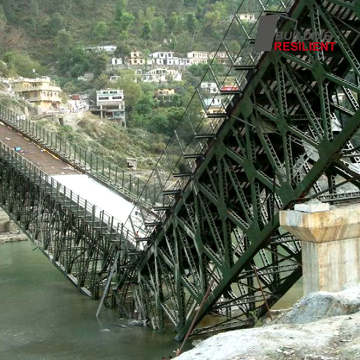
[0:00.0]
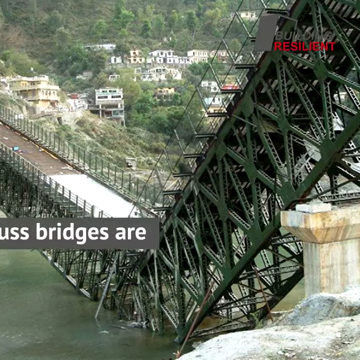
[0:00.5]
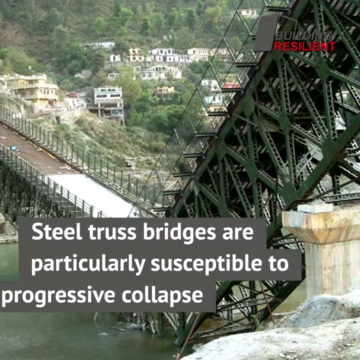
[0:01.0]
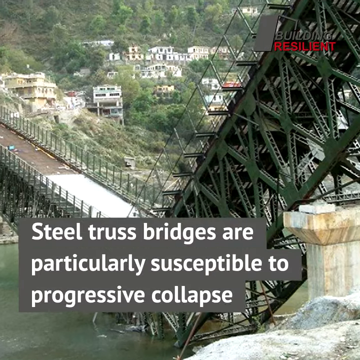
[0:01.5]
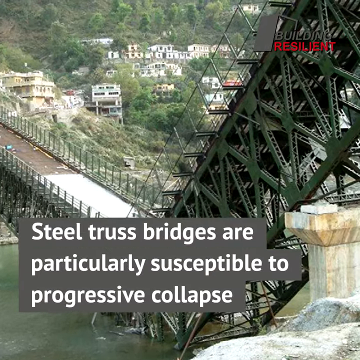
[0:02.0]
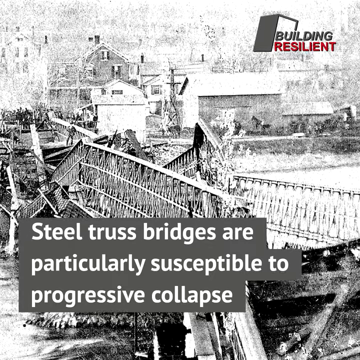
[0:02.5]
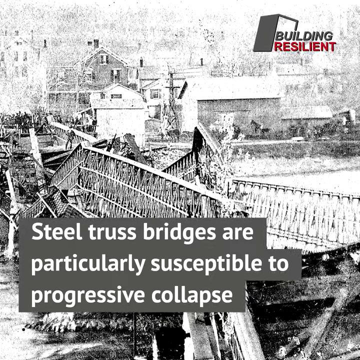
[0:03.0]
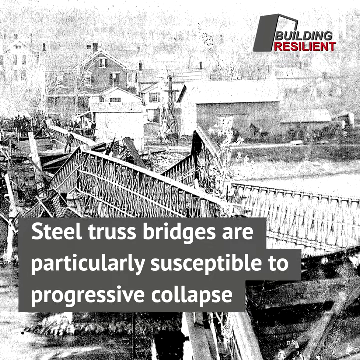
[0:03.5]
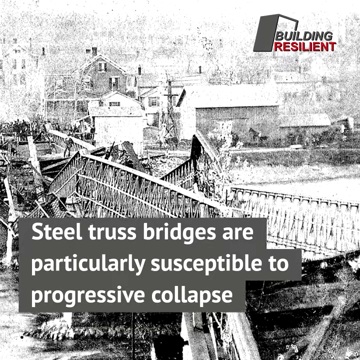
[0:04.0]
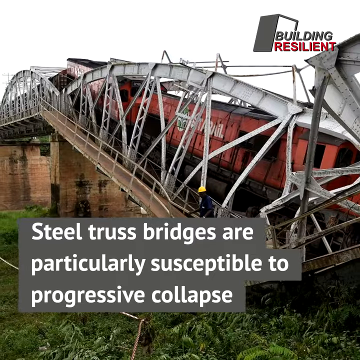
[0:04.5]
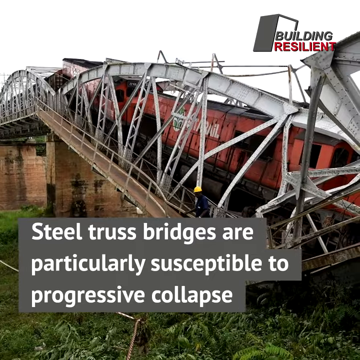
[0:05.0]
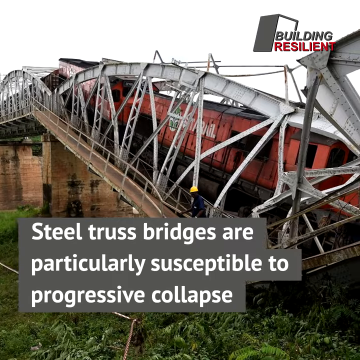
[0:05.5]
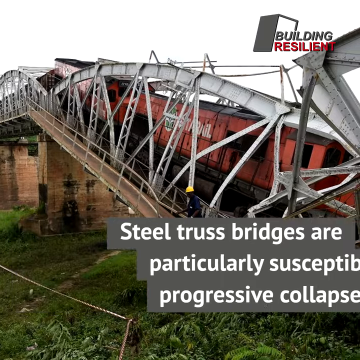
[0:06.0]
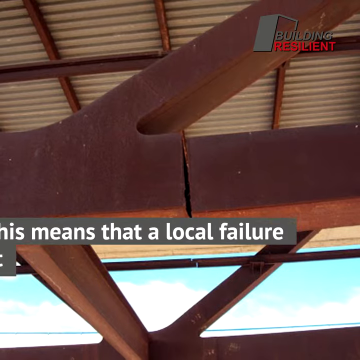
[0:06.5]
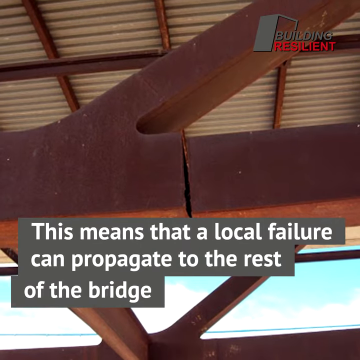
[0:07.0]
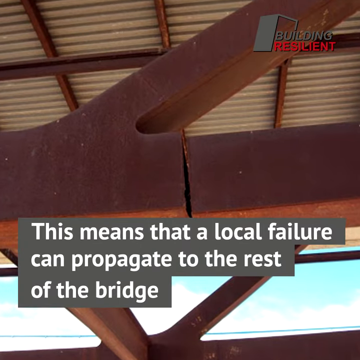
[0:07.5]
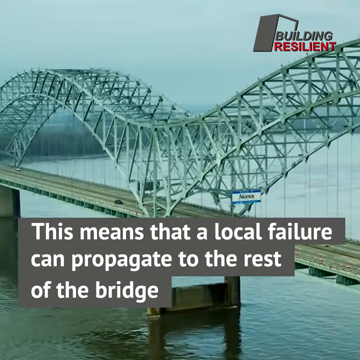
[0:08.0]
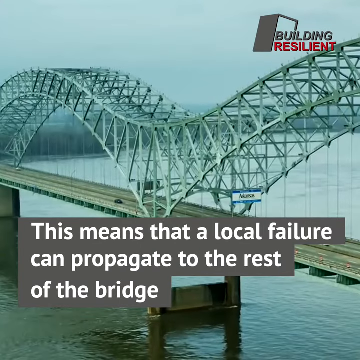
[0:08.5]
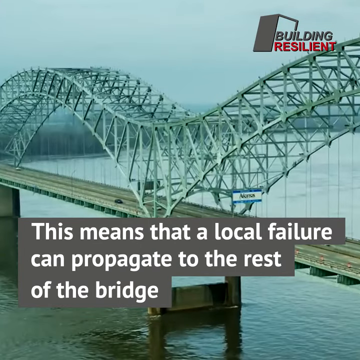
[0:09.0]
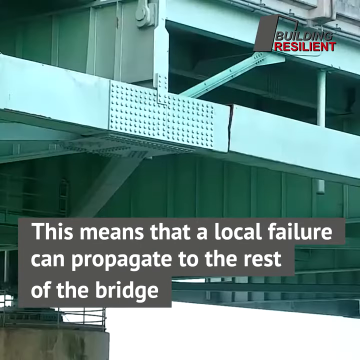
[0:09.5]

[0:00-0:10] The video opens on black-and-white imagery with many bridges in the background and the text "steel truss bridges are particularly susceptible to progressive collapse". The images then turn to color, and the words "this means that a local failure can propagate to the rest of the bridge" appear. The bridge shown possibly spans between Arkansas and Tennessee; a sign says "Arkansas" and is sort of like the shape of the bridge. Another bridge with a steep bend in it follows, and the words "steel truss bridges are particularly susceptible to progressive collapse" pop up on the screen as the imagery returns to black and white. Next, an image of a bridge shows what looks like a metal or iron portion with a very large crack in it.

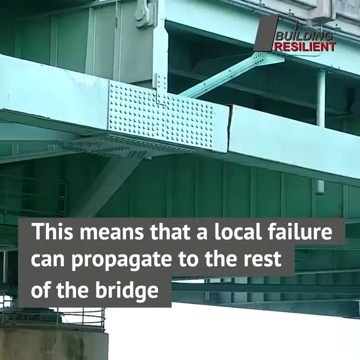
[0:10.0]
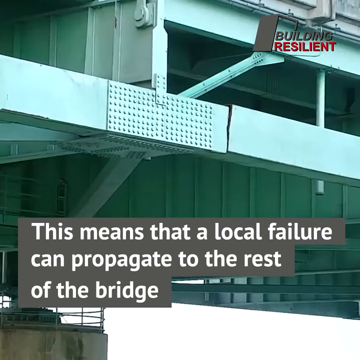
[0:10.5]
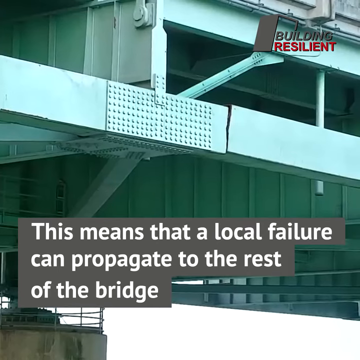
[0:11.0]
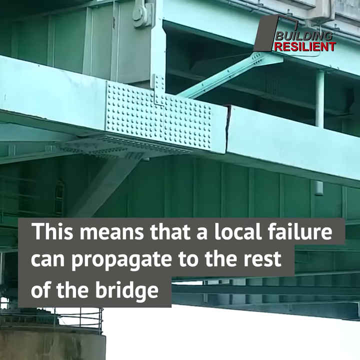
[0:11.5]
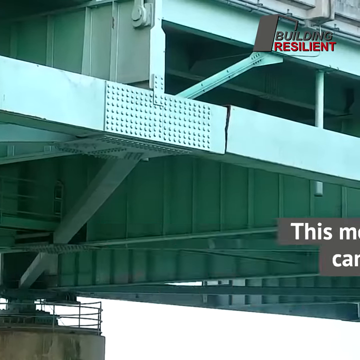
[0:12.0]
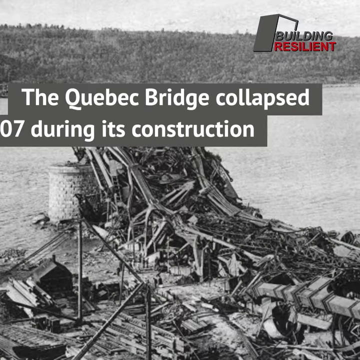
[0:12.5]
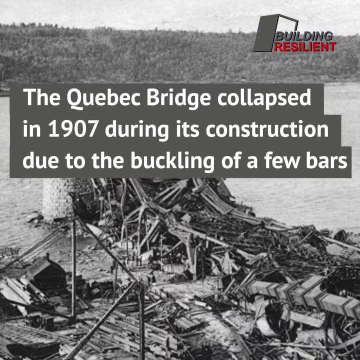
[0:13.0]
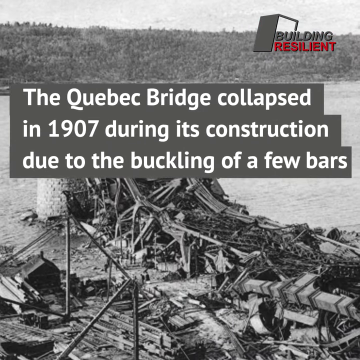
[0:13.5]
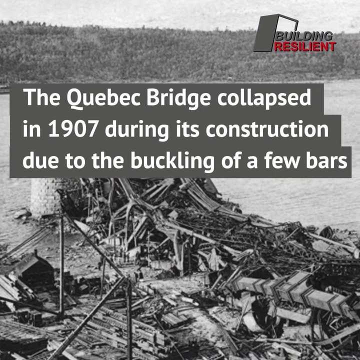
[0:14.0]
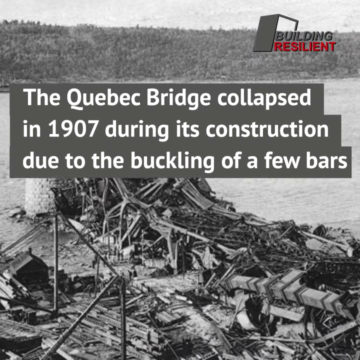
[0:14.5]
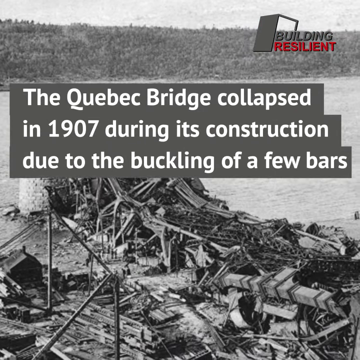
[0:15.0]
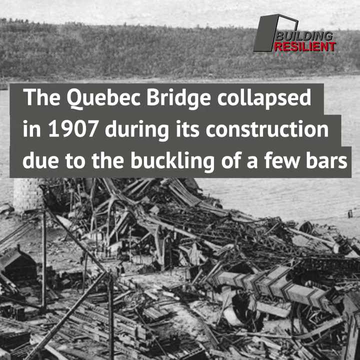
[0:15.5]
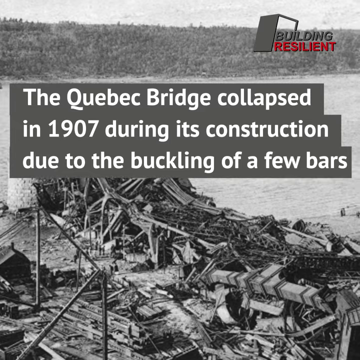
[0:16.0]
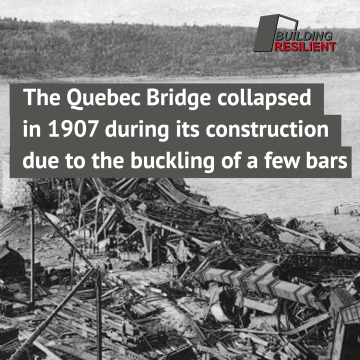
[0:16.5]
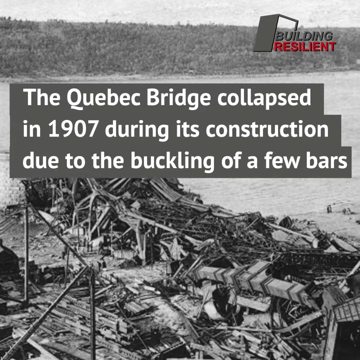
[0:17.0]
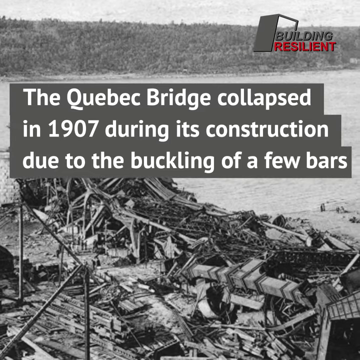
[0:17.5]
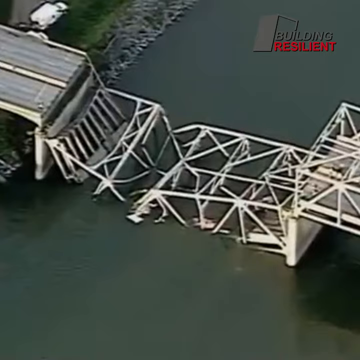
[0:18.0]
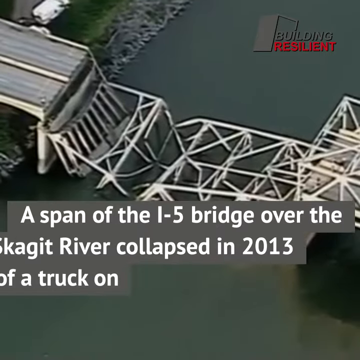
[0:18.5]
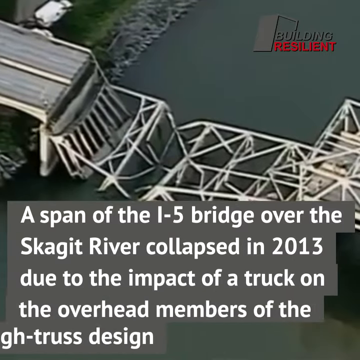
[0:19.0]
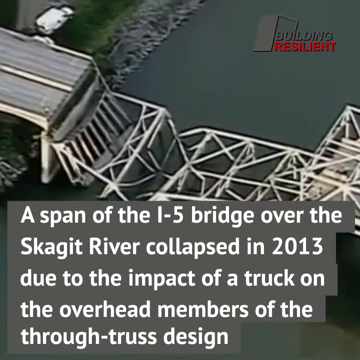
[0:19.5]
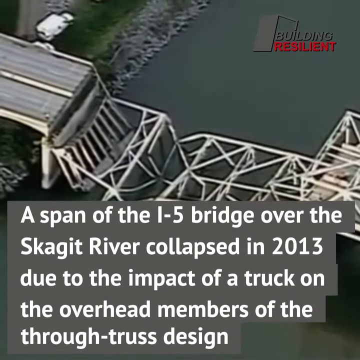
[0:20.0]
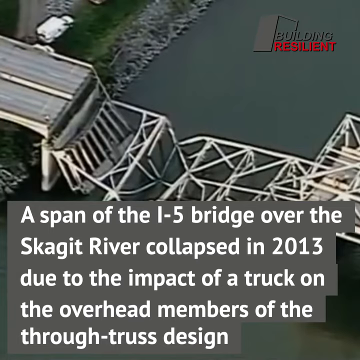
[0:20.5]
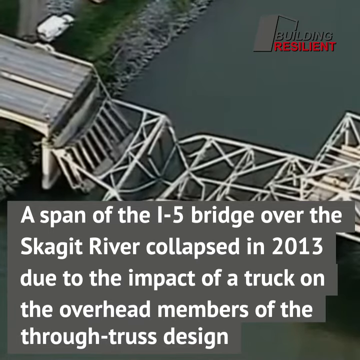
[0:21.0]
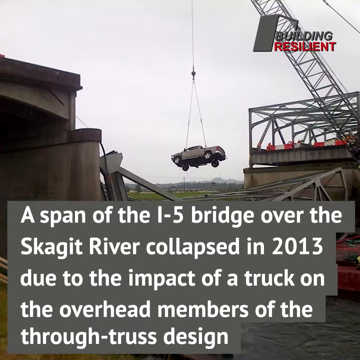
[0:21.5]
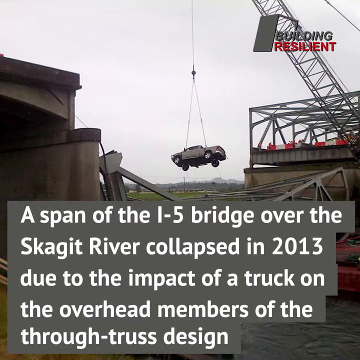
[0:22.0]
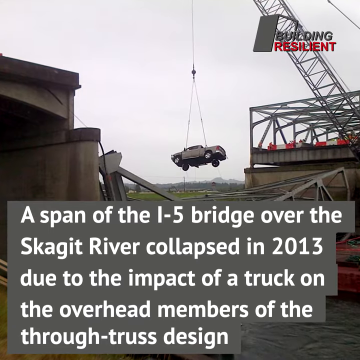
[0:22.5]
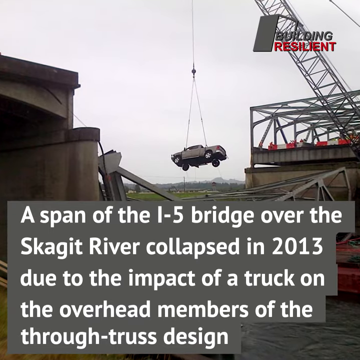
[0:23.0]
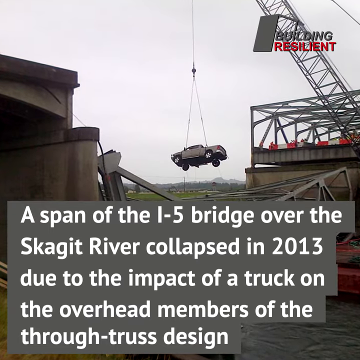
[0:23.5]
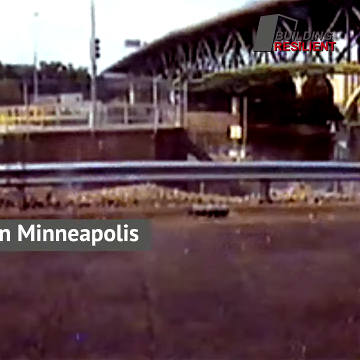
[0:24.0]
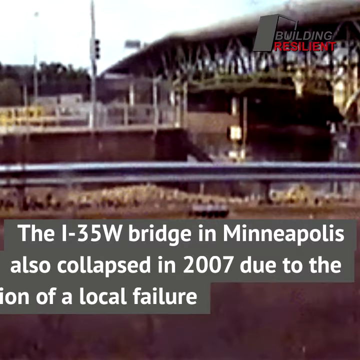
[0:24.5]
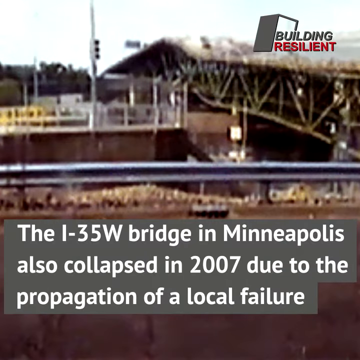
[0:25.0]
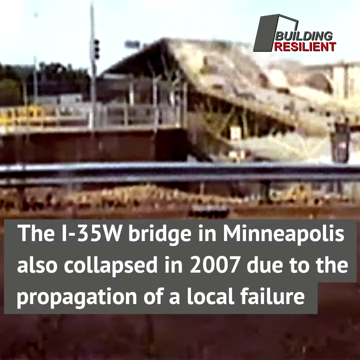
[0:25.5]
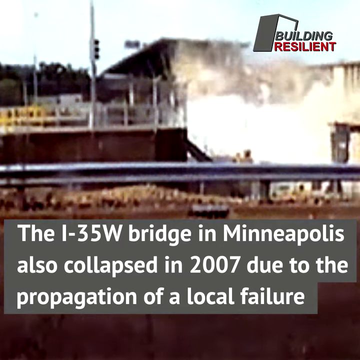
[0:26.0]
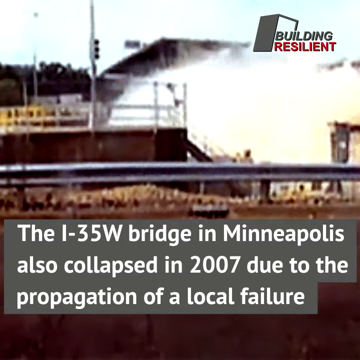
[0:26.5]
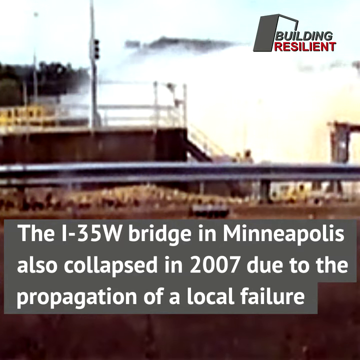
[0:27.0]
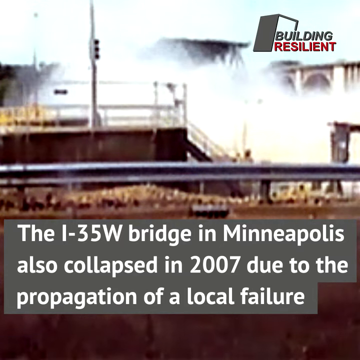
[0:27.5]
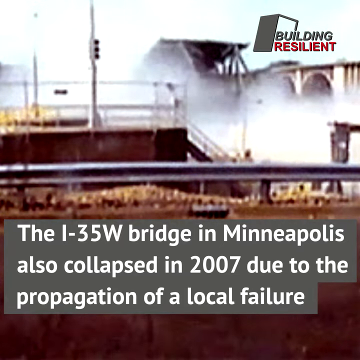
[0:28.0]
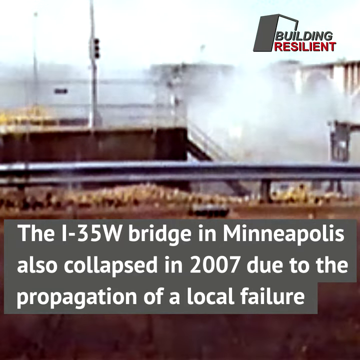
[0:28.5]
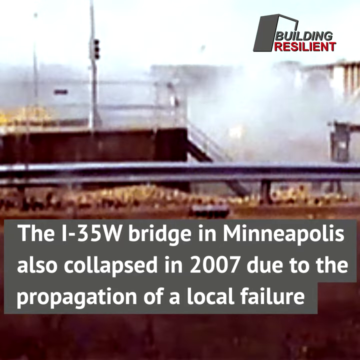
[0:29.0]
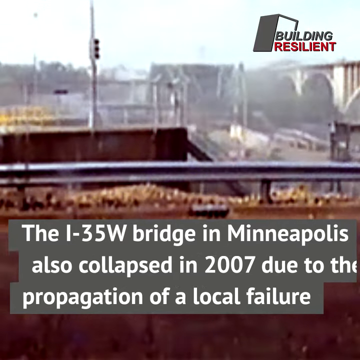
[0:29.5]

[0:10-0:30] An aqua-colored bridge appears, apparently with a large crack in it. In the upper right of the frame are the words "building resilient", and toward the bottom the words "this means that a local failure can propagate to the rest of the bridge" appear in white on a gray background. Black-and-white images of a bridge follow, and the words "the Quebec Bridge collapsed in 1907 during its construction due to the buckling of a few bars" pop up, along with a totally collapsed bridge. Next comes another bridge that seems to be all metal, with words at the bottom reading "a span of the I-5 bridge over the Skagit River collapsed in 2013 due to the impact of a truck on the overhead members of the through truss design".